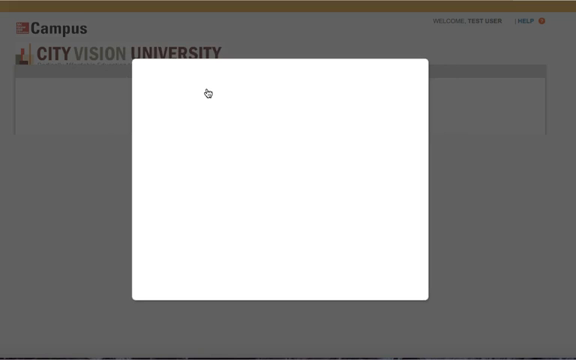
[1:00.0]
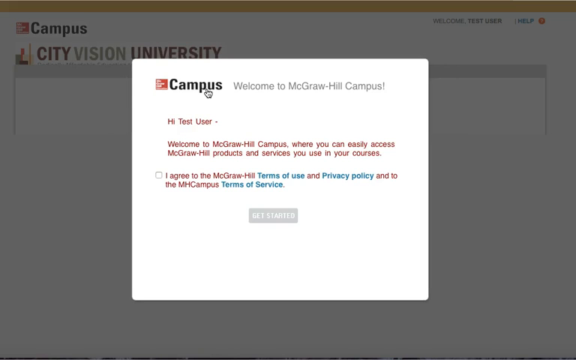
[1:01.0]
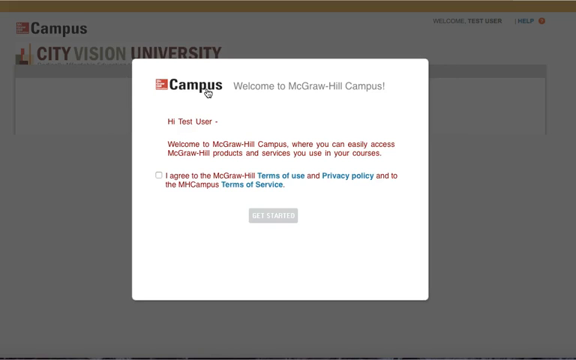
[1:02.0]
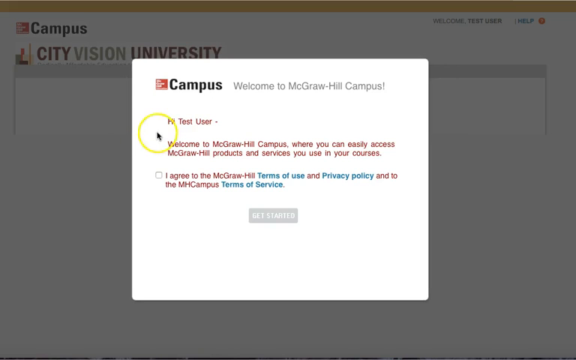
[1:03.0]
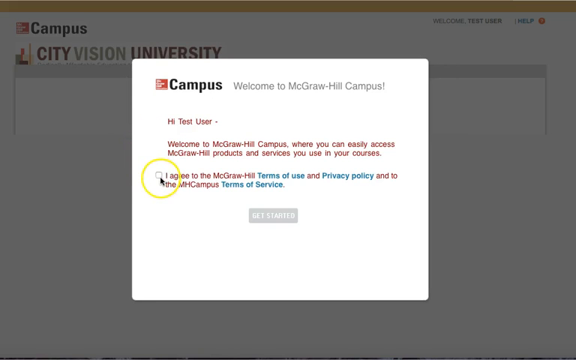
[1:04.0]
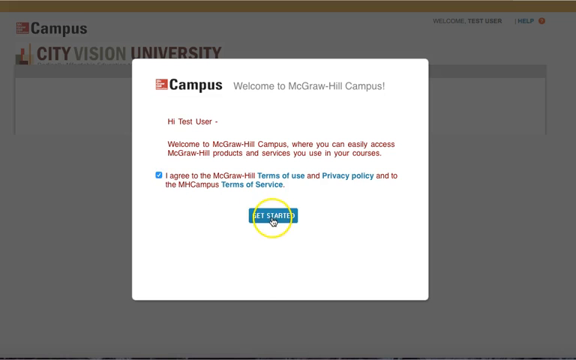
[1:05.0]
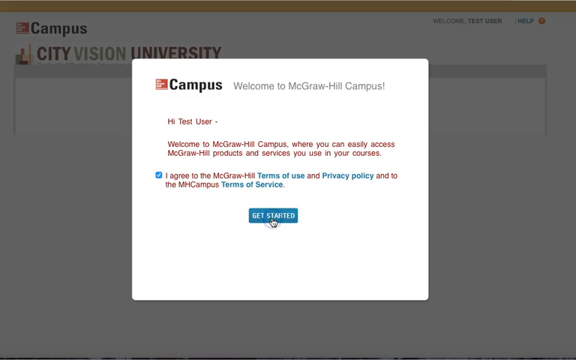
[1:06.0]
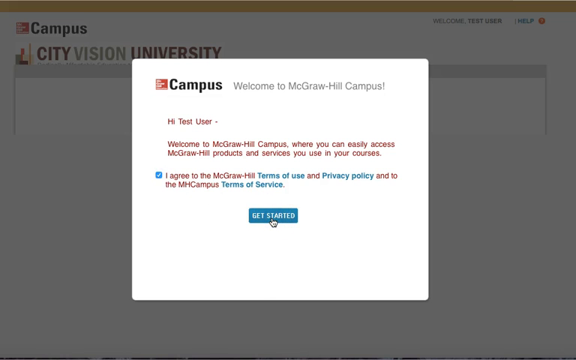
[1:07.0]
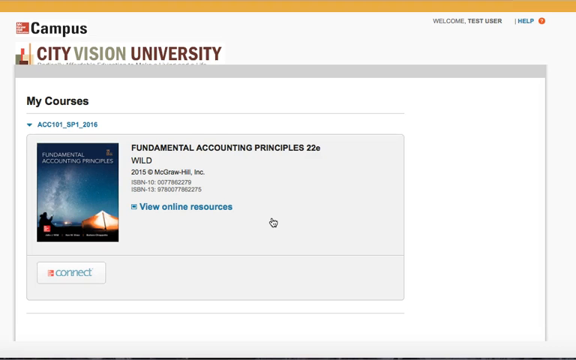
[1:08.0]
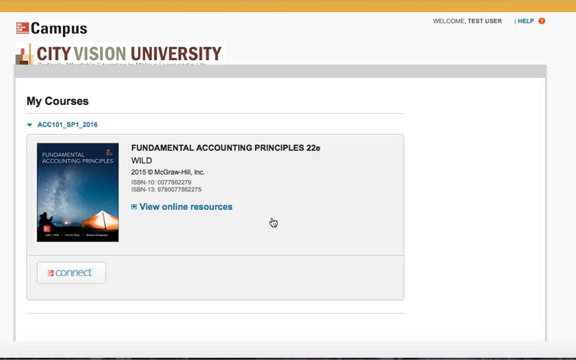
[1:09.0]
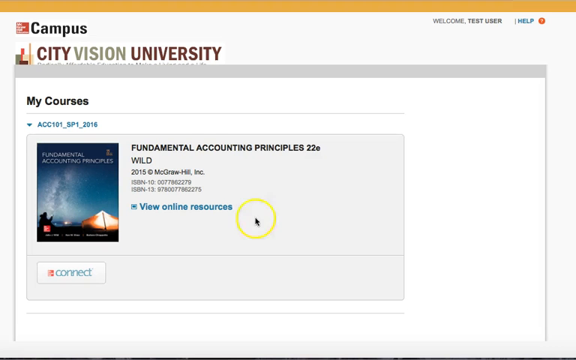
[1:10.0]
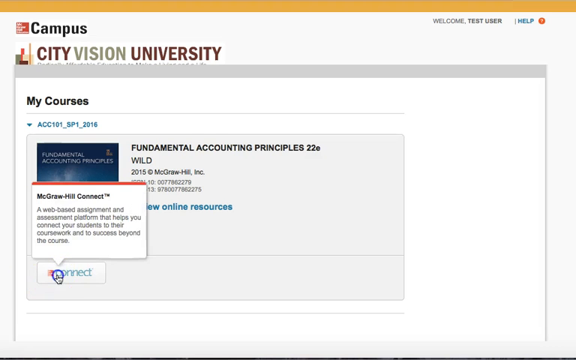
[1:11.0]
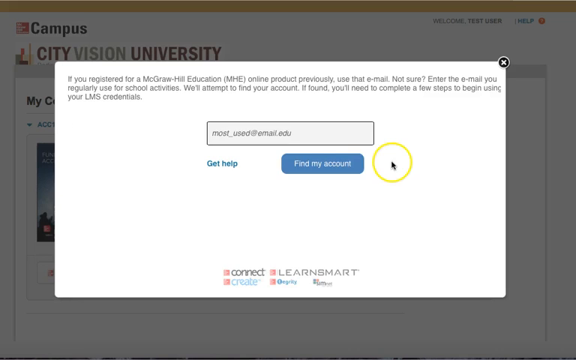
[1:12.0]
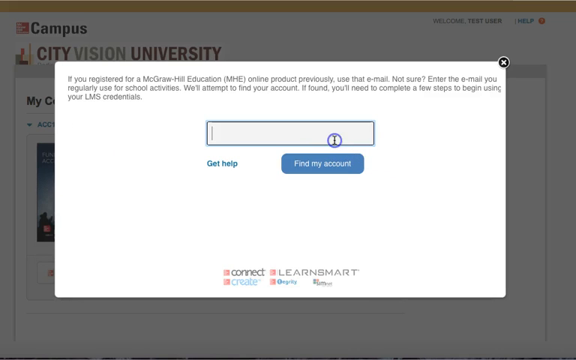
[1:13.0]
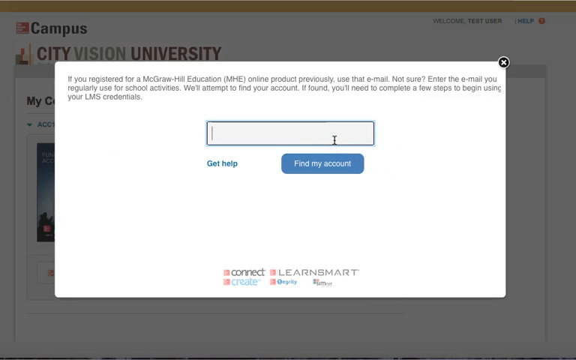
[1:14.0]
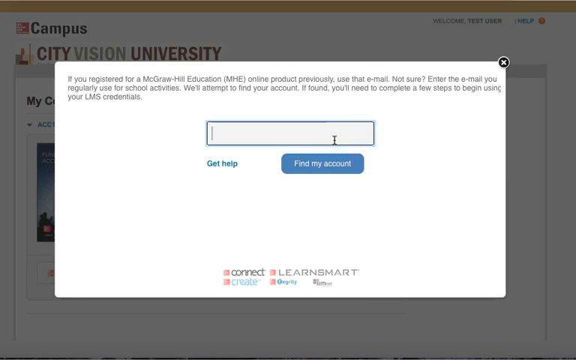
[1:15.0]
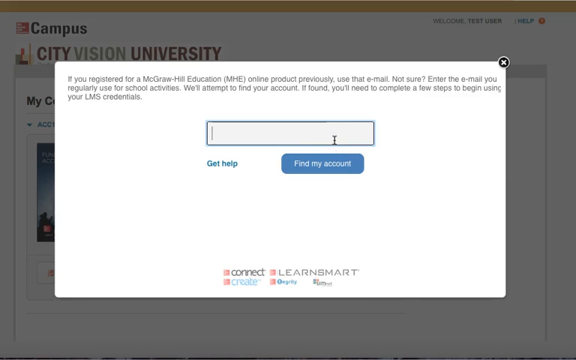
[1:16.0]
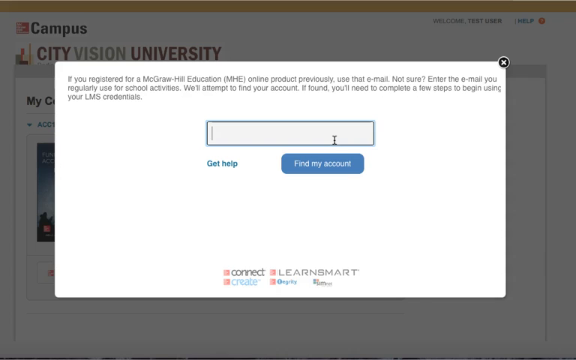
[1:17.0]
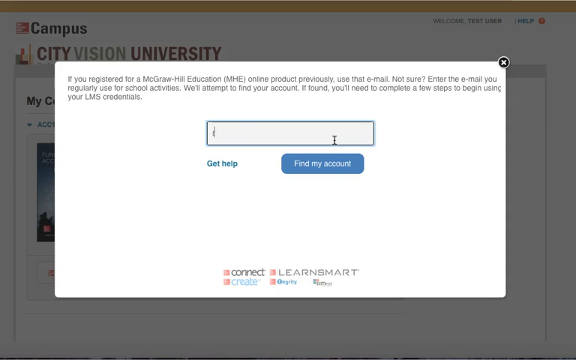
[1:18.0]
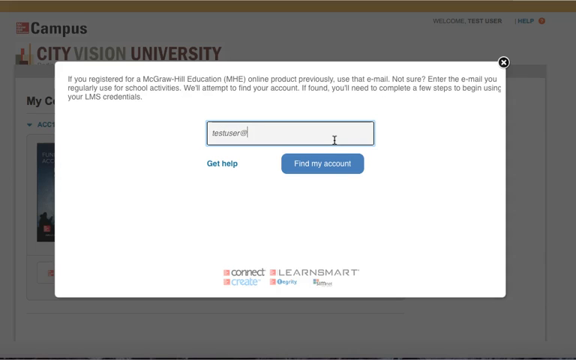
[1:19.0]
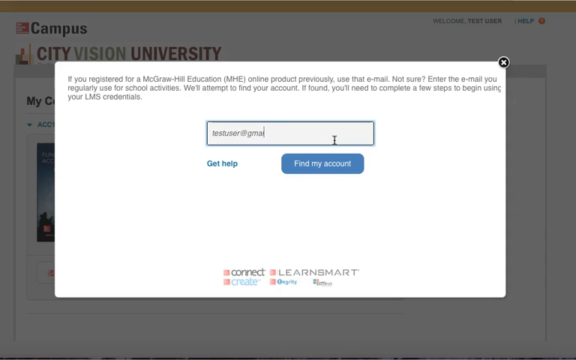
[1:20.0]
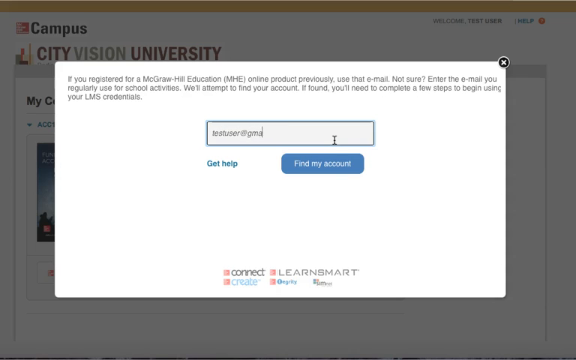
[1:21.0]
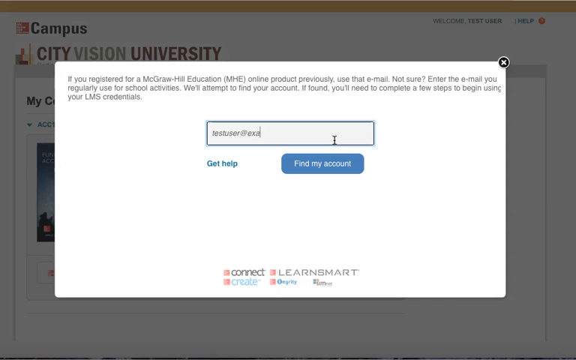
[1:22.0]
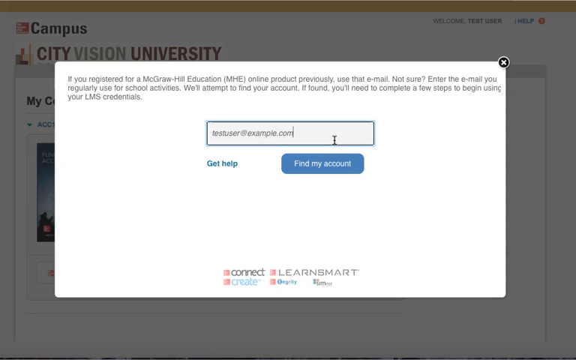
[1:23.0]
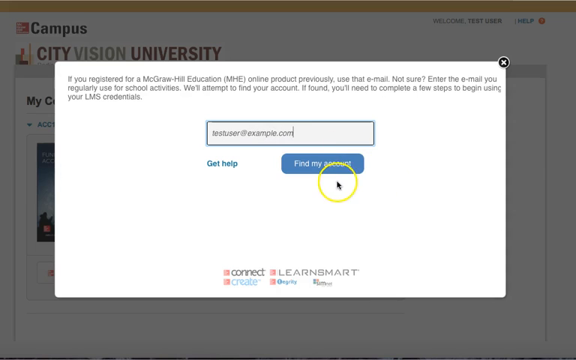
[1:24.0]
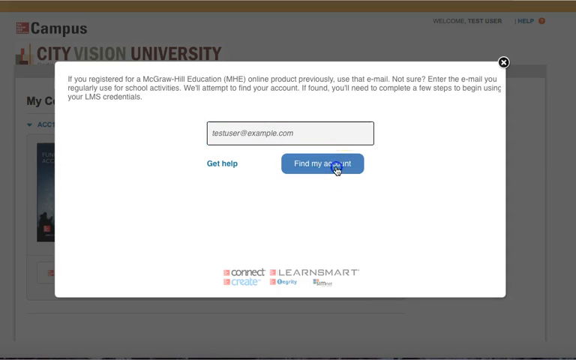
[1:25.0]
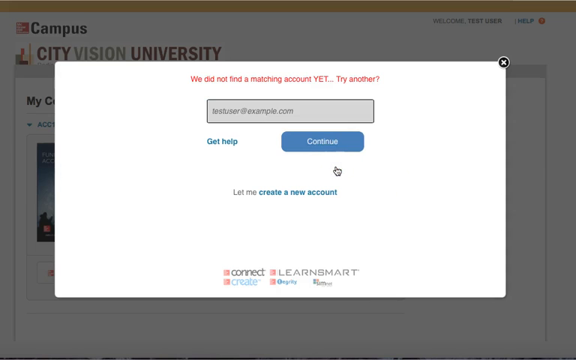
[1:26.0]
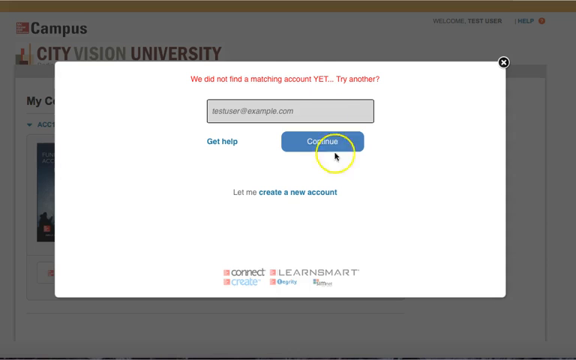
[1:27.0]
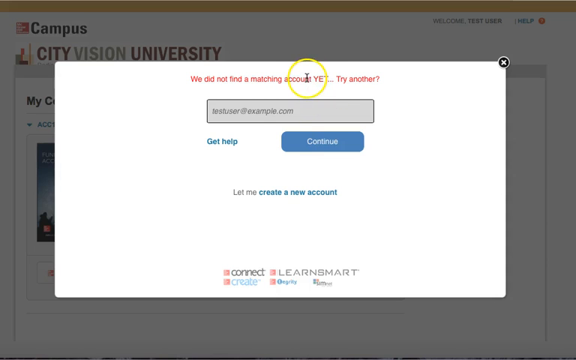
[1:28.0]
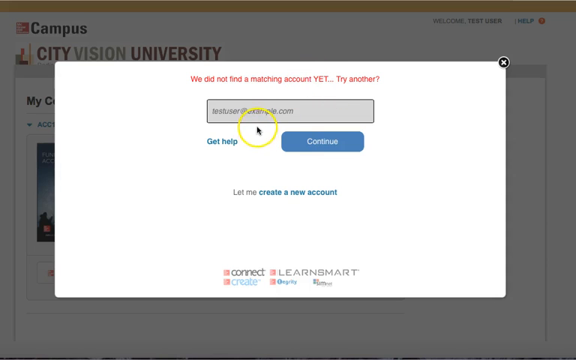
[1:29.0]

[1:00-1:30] The McGraw Hill campus website appears, with a pop-up asking to agree to the terms of service and privacy policies. The person accepts it and clicks a "get started" button. The screen then shows "fundamental accounting principles" 22nd edition in a kind of digital library where the book can be accessed. He clicks on something underneath the book, which asks for the email used to register the book purchase. He types in an email, apparently a gmail or example address, and clicks "find my account". The account is not found.